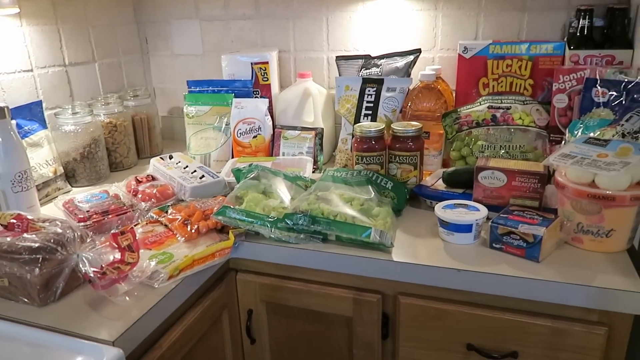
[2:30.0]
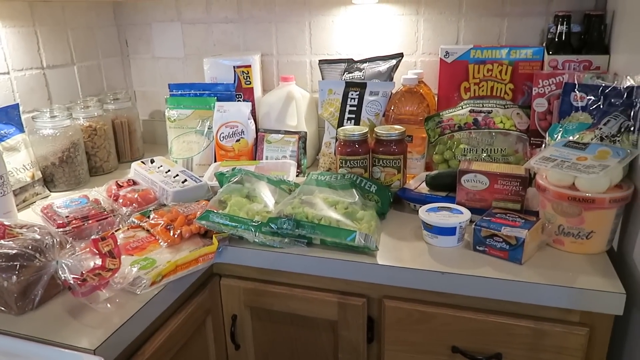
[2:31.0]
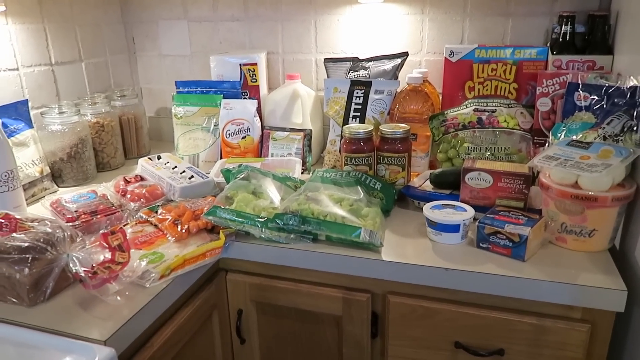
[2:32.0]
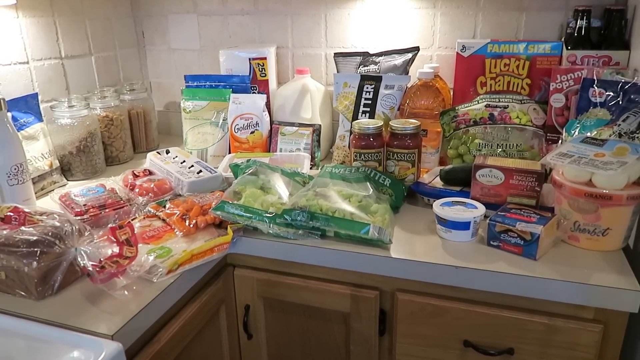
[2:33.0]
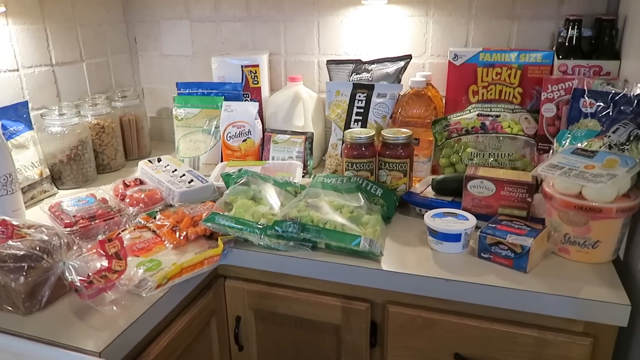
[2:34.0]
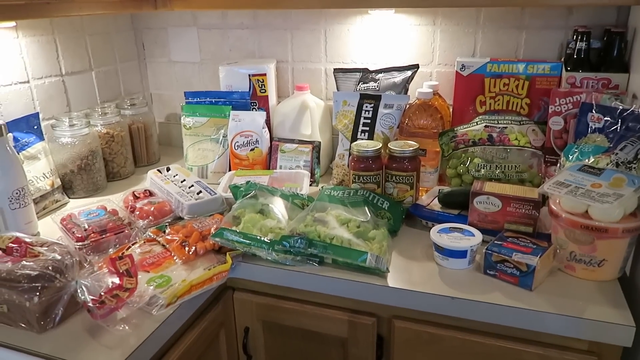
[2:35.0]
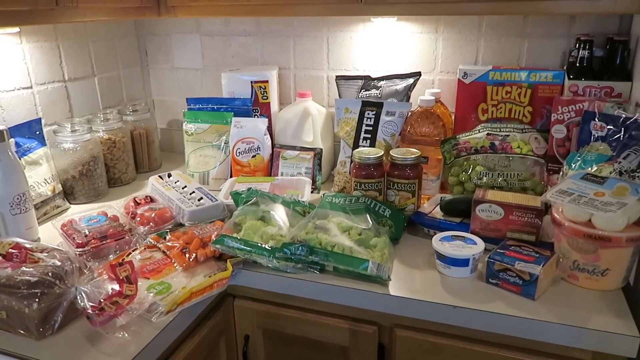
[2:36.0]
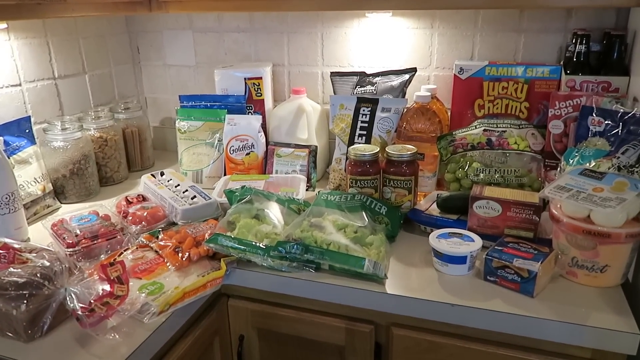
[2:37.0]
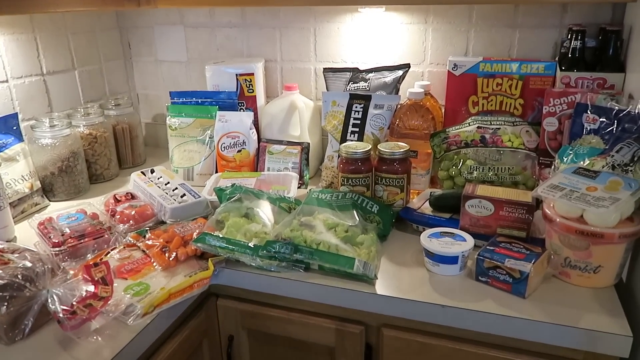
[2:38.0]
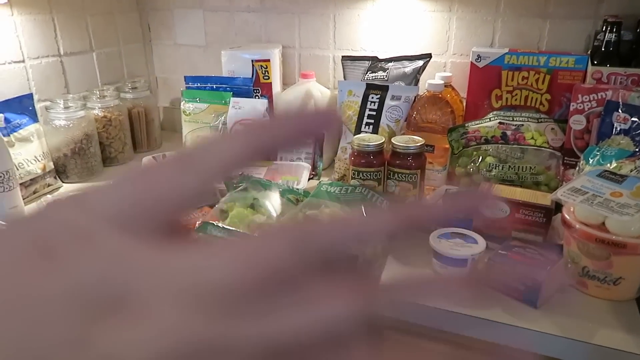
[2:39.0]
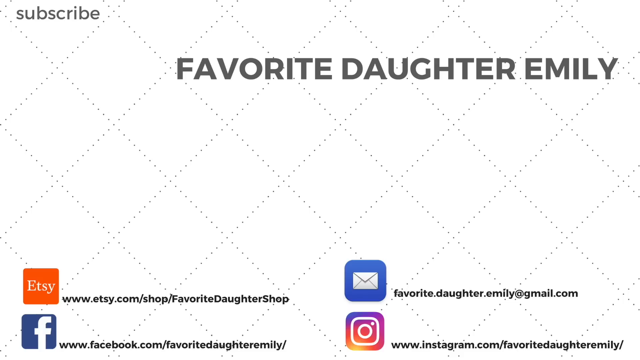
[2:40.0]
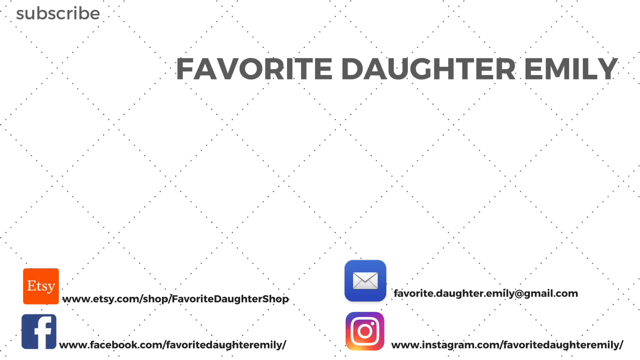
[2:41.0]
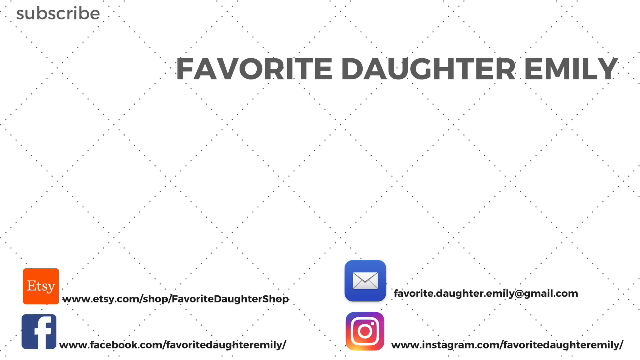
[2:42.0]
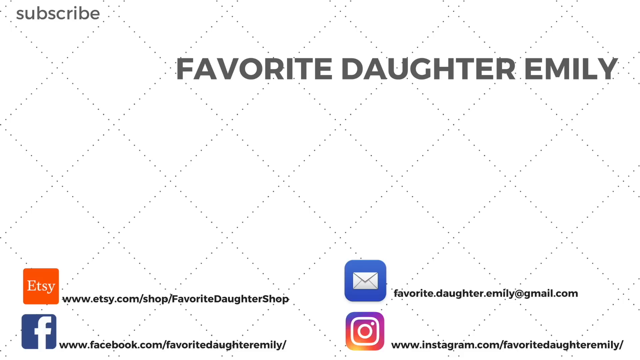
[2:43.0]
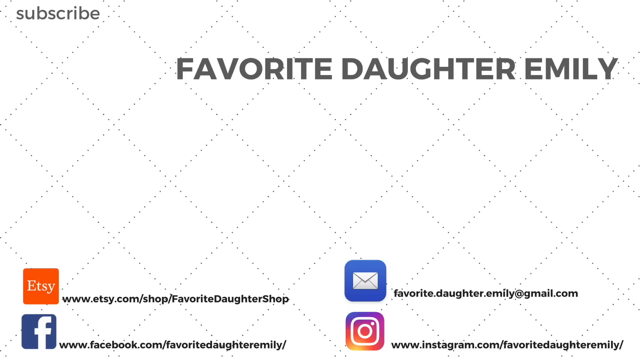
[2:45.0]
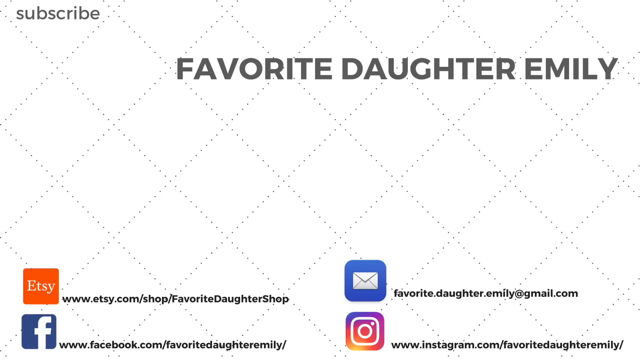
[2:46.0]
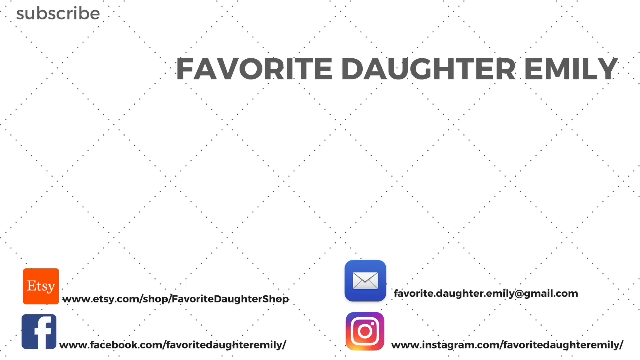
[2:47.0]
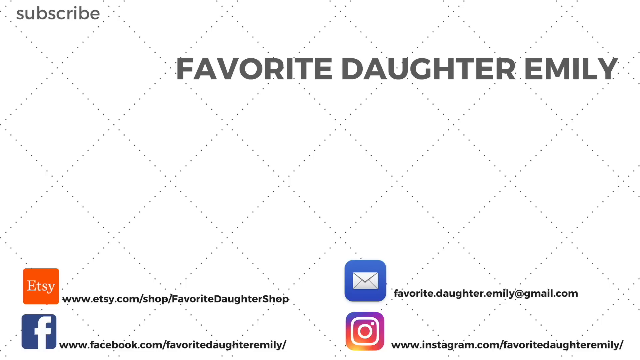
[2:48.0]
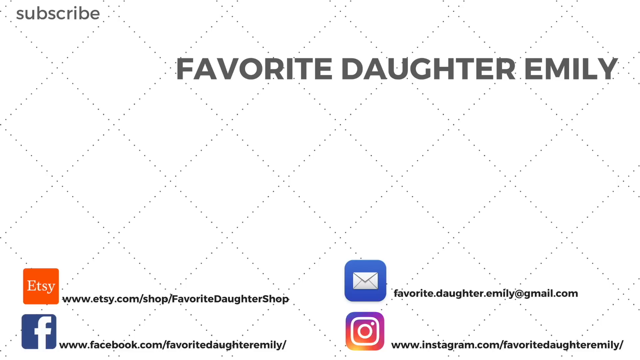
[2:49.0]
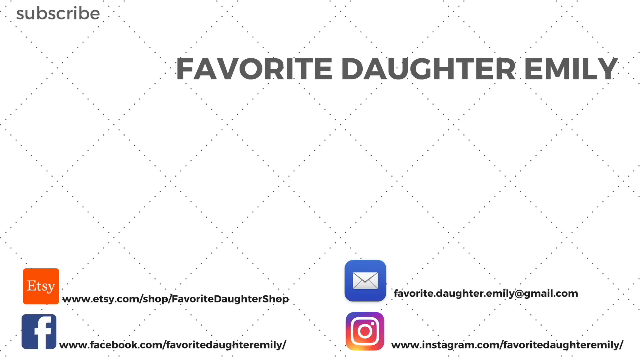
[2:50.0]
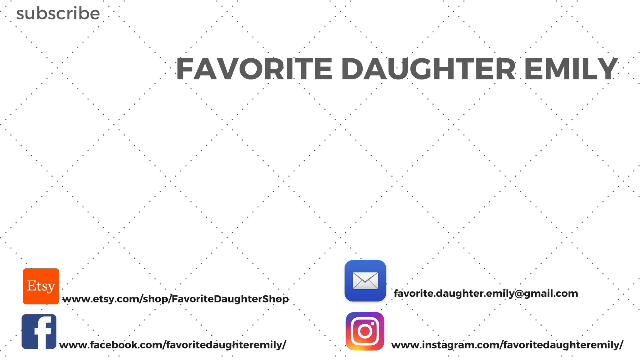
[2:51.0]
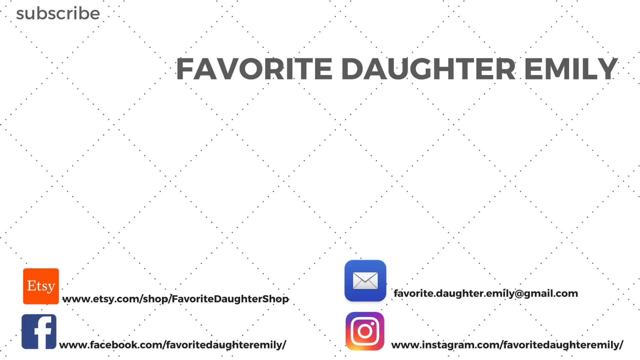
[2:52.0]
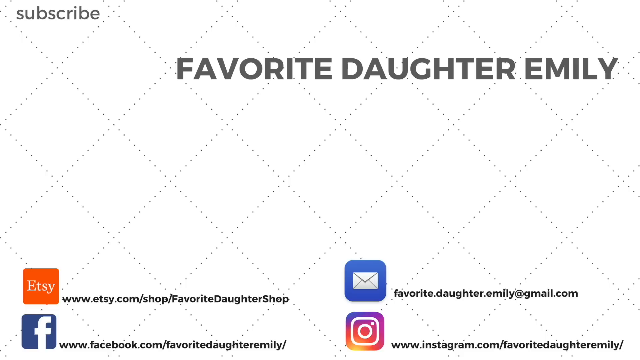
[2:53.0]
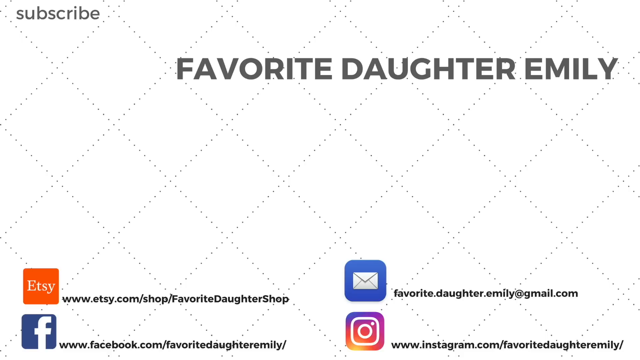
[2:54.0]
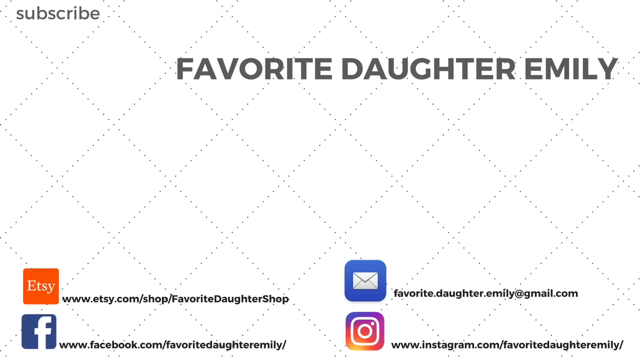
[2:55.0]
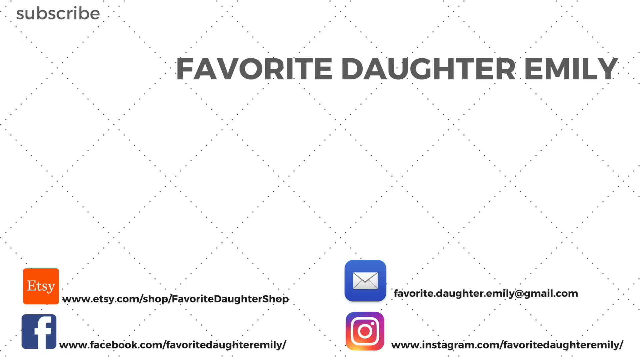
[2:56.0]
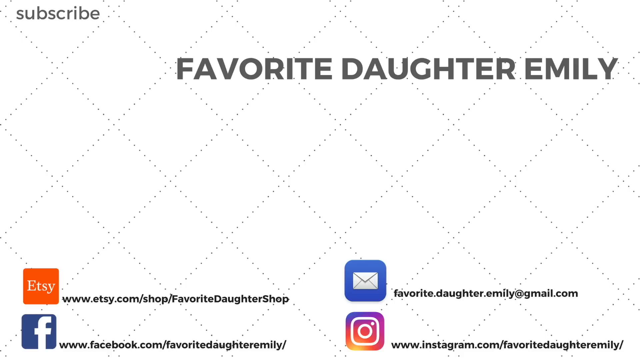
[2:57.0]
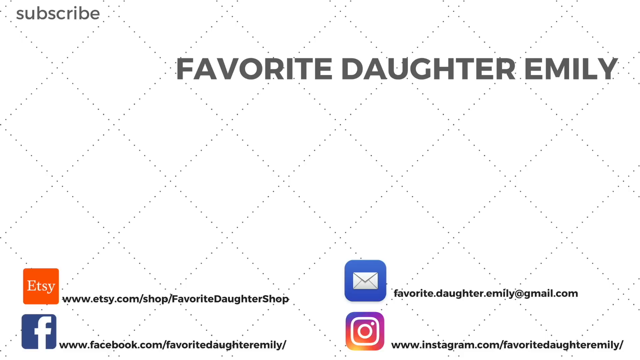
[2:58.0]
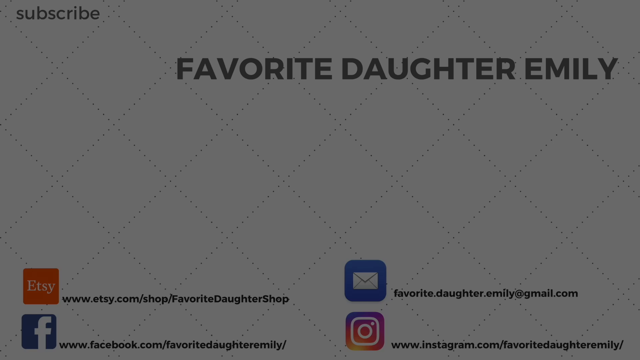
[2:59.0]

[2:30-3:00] The slightly wobbly camera work returns, looking over the range of items bought. The video then cuts to a white screen with a diamond pattern made of dotted black lines. In the top left it says "subscribe", and below this, on the right of the screen, it says "favourite daughter Emily". At the bottom of the screen are a link to an Etsy shop, a Facebook page, an Instagram and an email address, with Favorite Daughter Emily appearing in most of the links. The screen stays for some time and then fades to black.